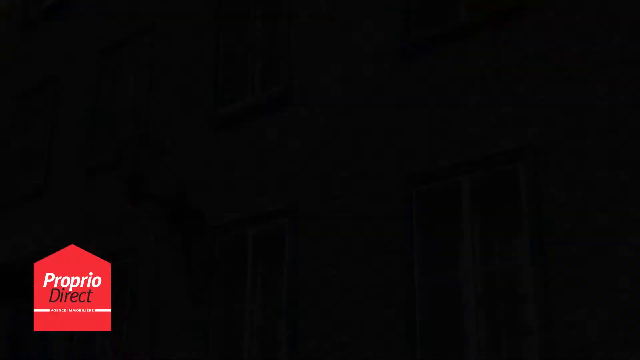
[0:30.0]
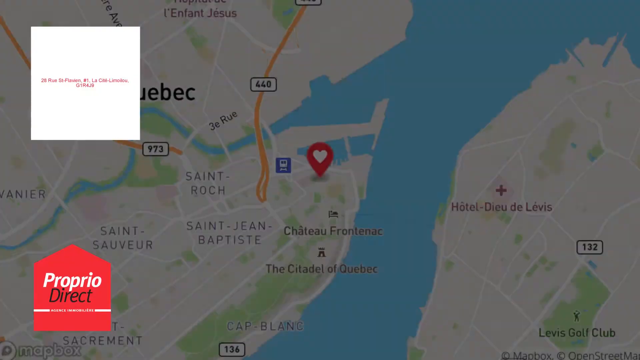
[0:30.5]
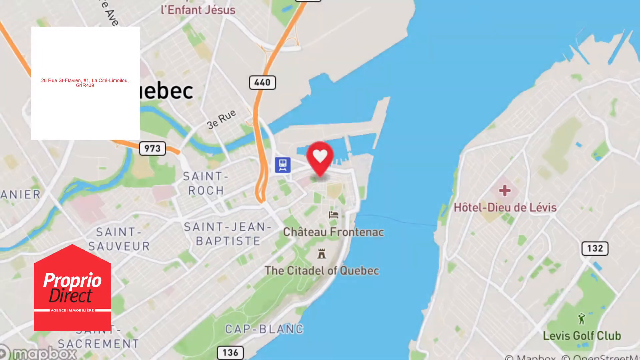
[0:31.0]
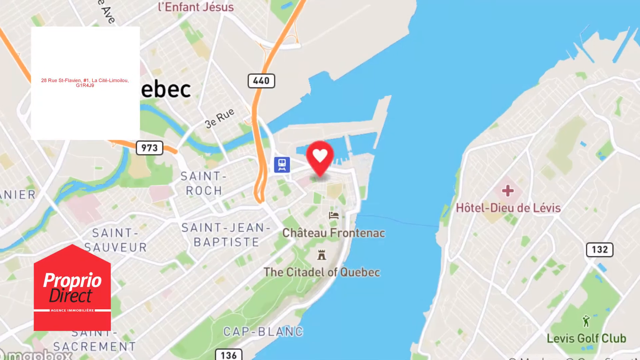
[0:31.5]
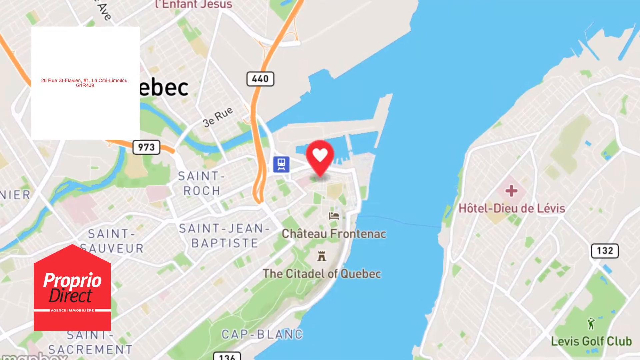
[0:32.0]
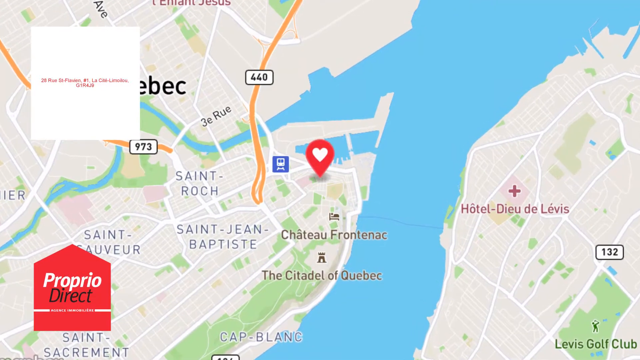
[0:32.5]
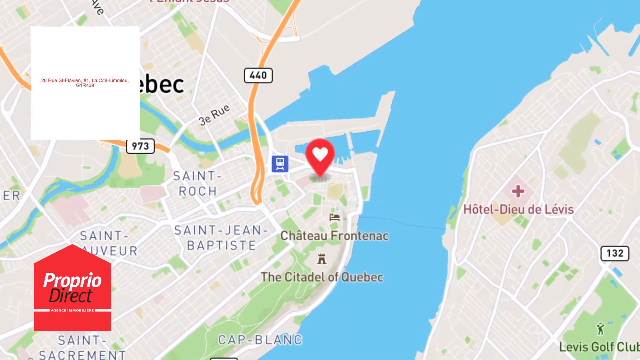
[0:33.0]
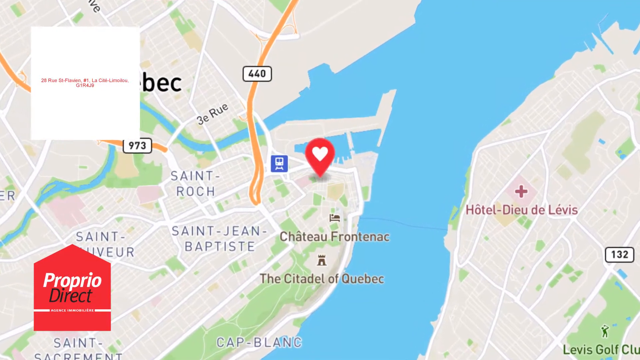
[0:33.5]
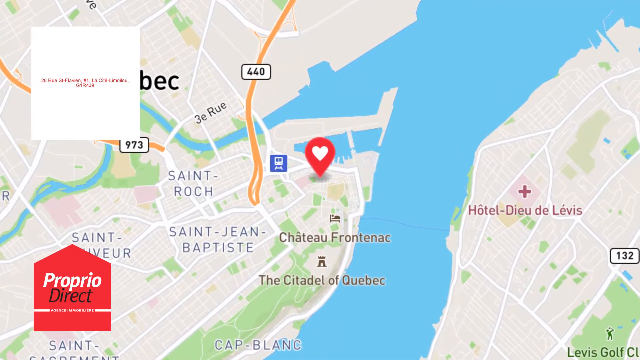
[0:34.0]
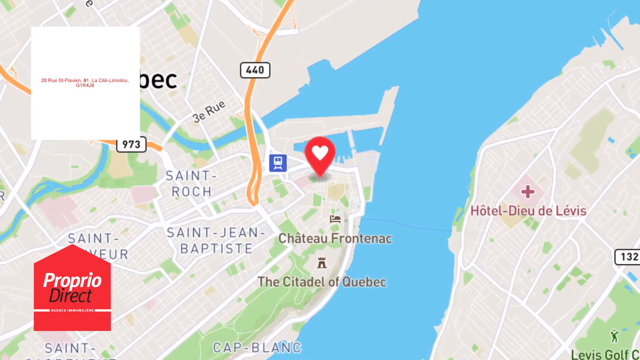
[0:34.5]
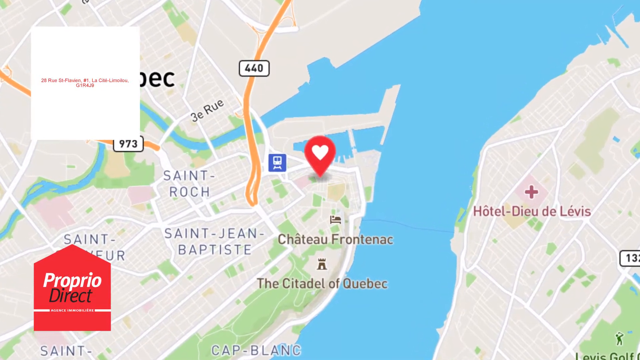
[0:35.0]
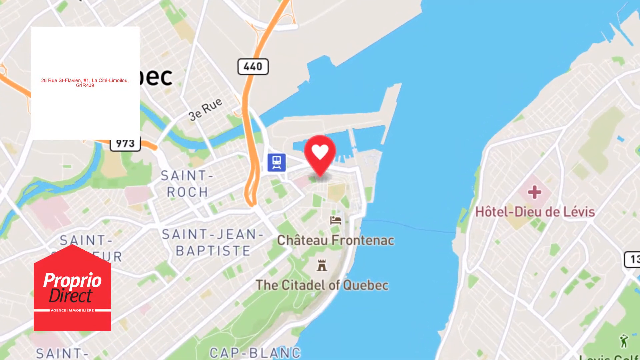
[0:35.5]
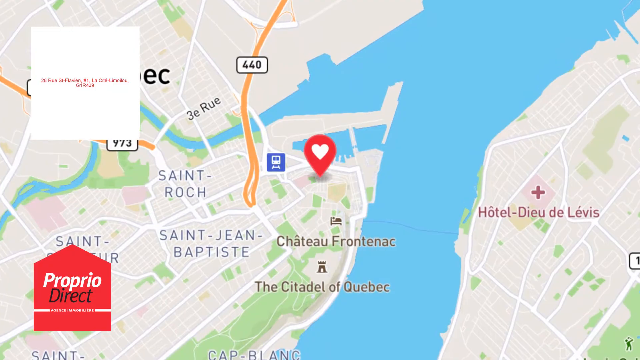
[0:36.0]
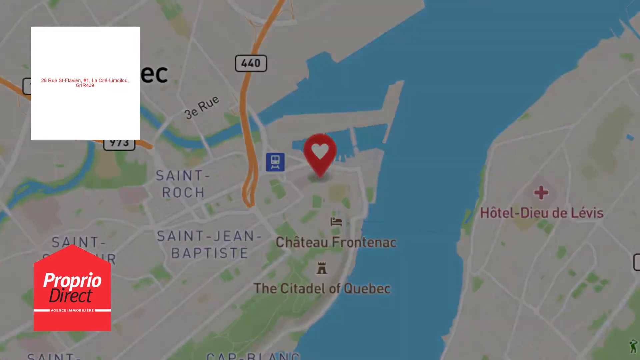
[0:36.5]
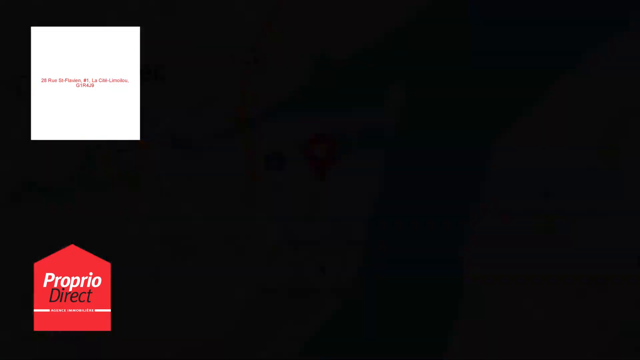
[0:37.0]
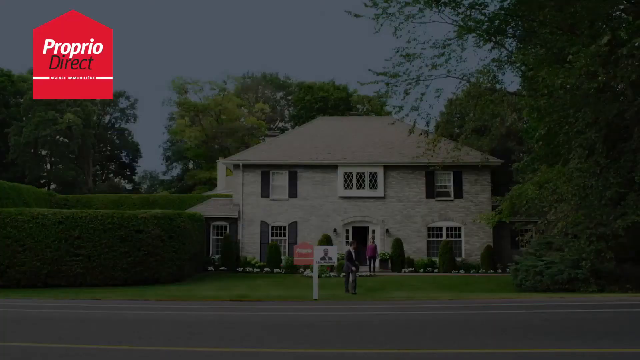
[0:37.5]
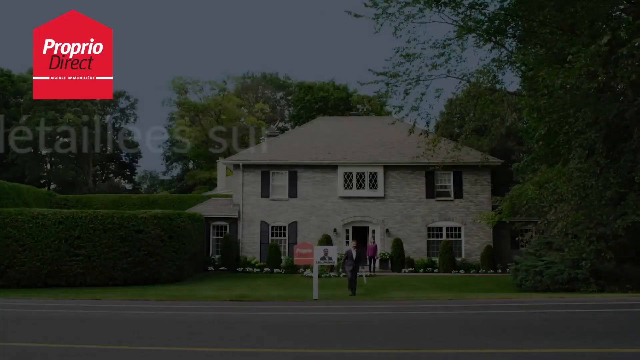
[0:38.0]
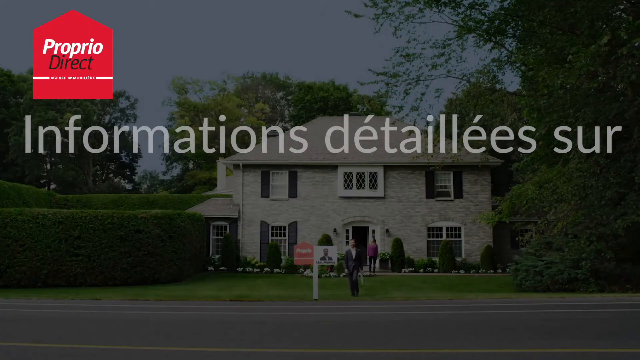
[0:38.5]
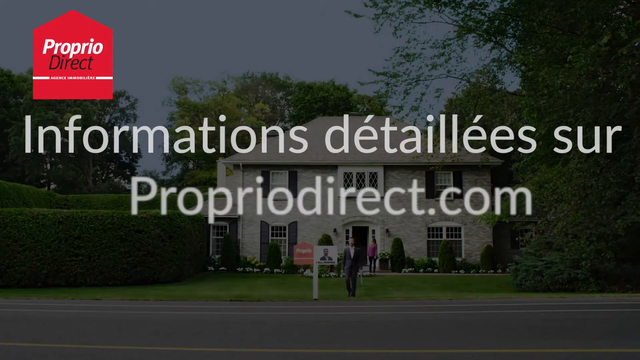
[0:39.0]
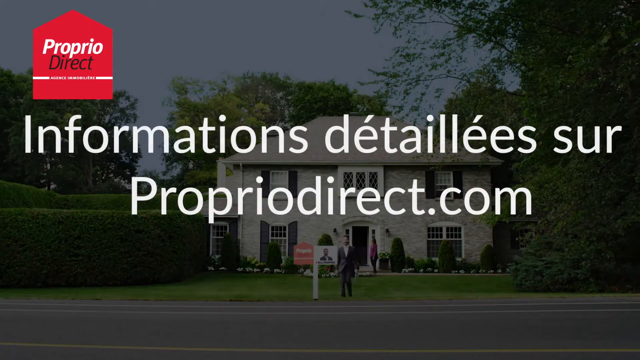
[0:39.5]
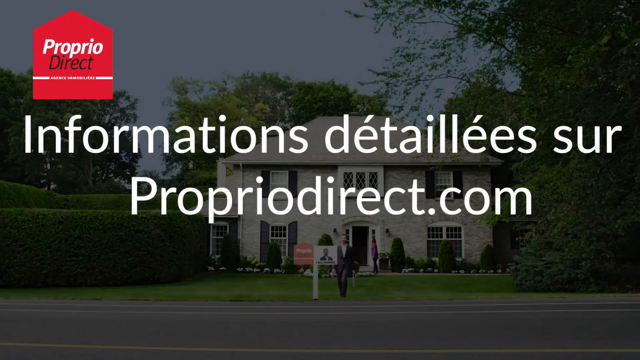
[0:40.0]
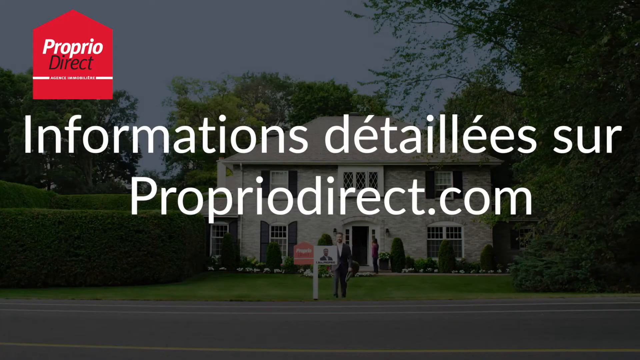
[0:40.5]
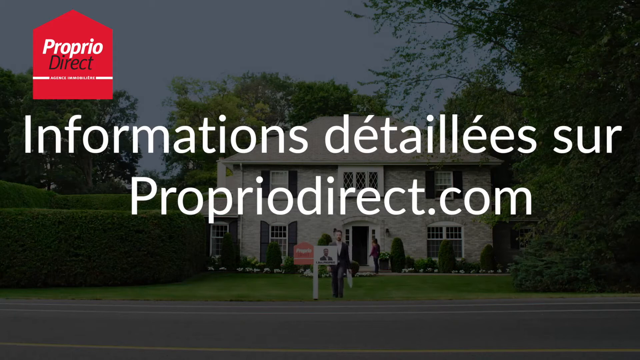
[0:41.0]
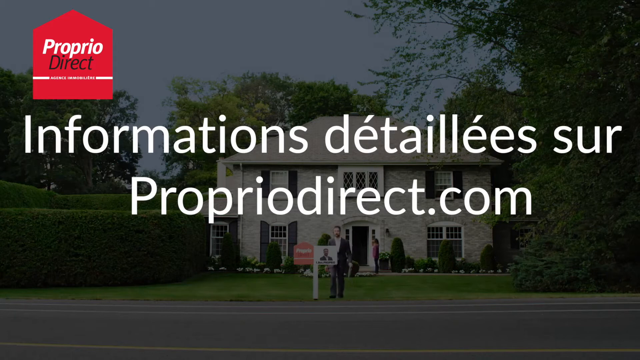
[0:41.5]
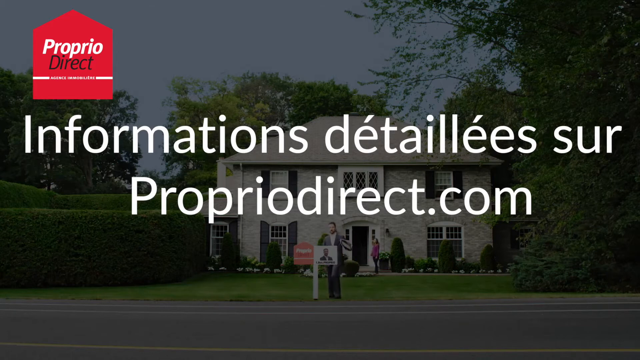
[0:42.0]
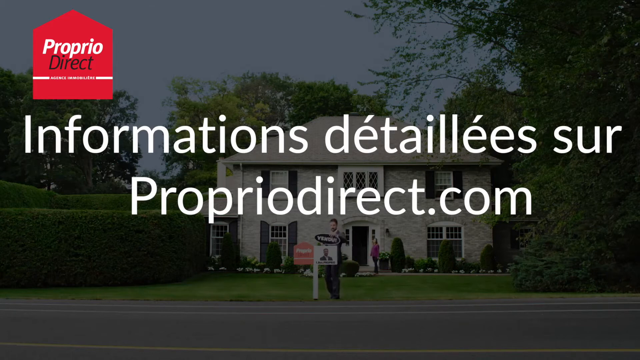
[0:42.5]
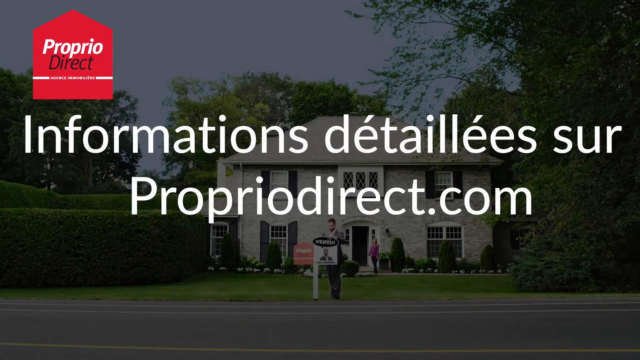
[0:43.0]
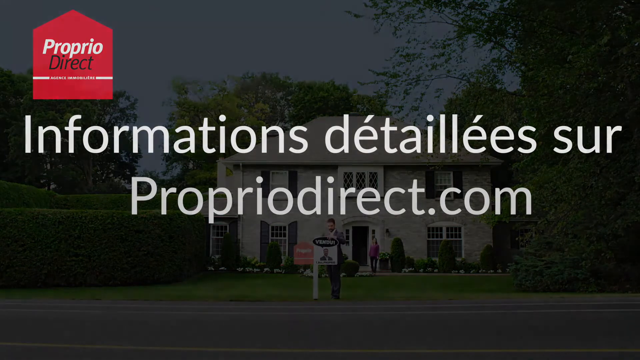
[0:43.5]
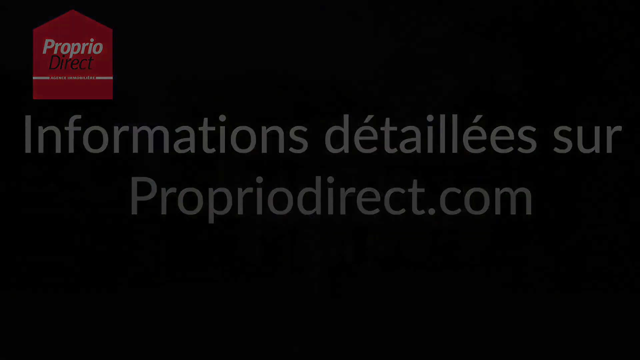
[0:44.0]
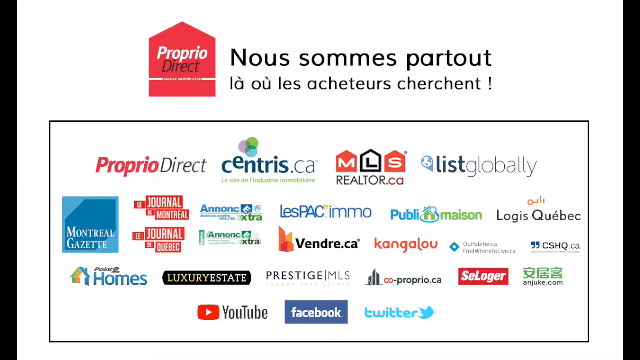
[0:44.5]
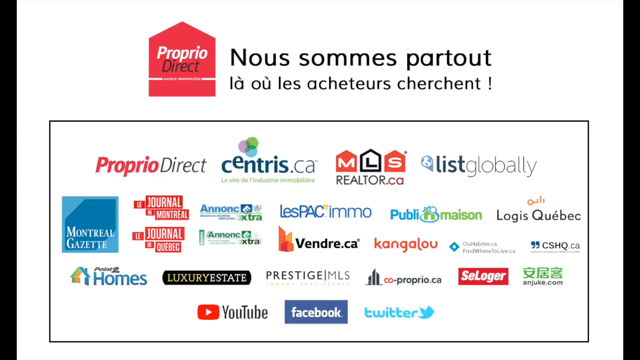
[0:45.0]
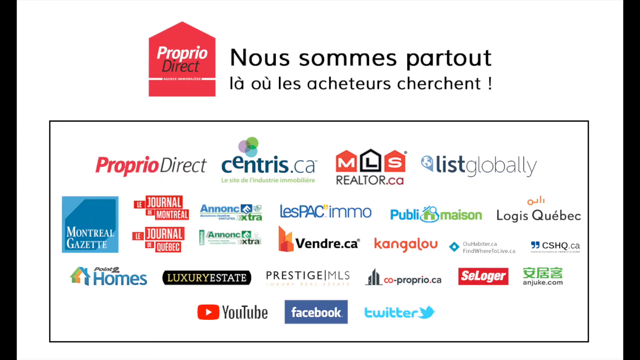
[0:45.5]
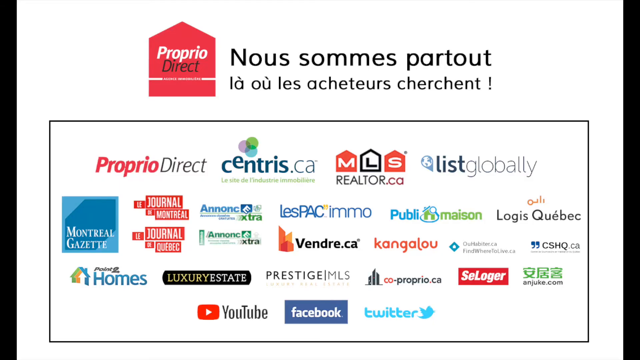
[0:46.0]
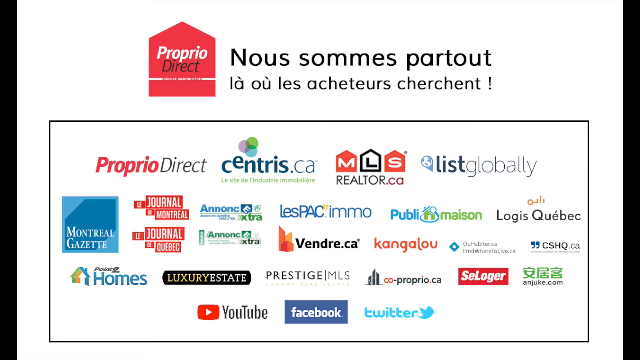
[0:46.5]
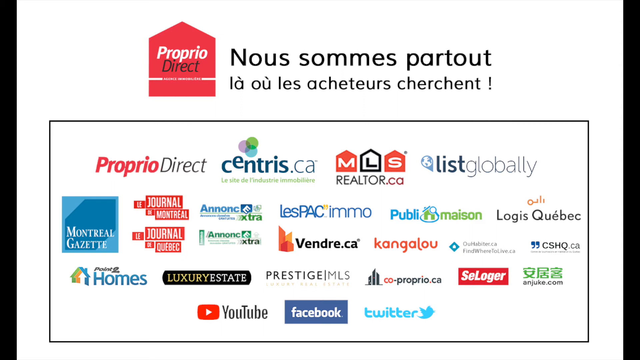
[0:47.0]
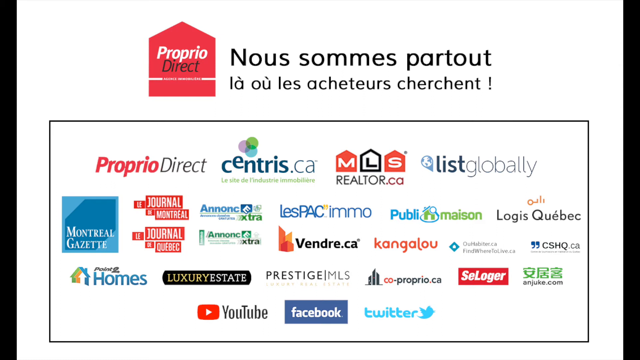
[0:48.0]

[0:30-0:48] A Google Maps view of a French city shows names including Saint-Roch, Saint-Jean-Baptiste and Hotel Dieu-de-Livé, along with what looks like covered writing apparently spelling Quebec. The Propio Direct logo with a red background is in the bottom right. In the top left there is a red and white square with some red writing indicating a specific place marked by a heart. The view slowly shifts toward the heart and then fades to black, followed by a house with a grey brick texture, very immersed in nature, with a tree on the right that extends over the top of the house and a well-trimmed hedge on the left. A man in a suit gets out of the house, and a girl in a purple dress is near the entrance. Writing ending in "sur PropioDirect.com" then appears on the screen while everything remains a little faded. The man walks up to the mailbox and places a sign on top of it. The scene fades out to a series of what are perhaps brands or sponsors related to Propio Direct on a white background.